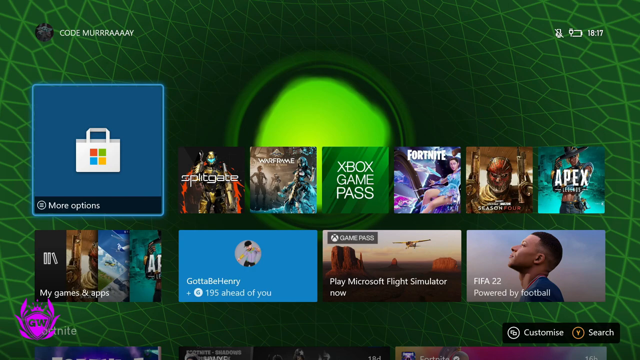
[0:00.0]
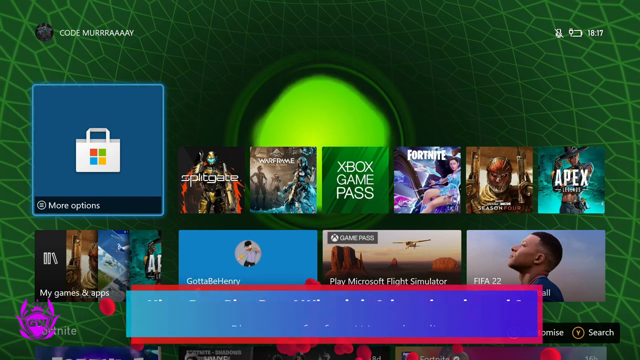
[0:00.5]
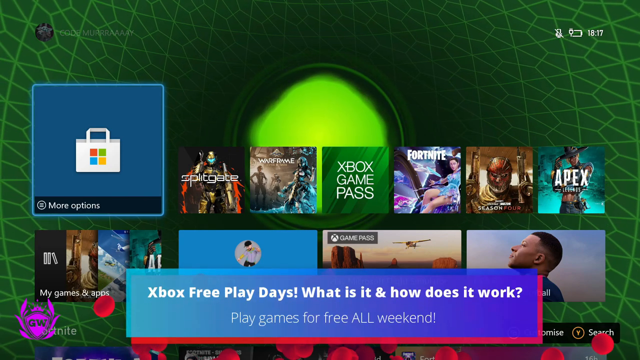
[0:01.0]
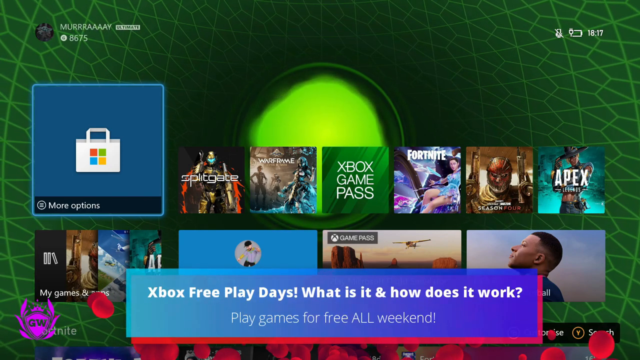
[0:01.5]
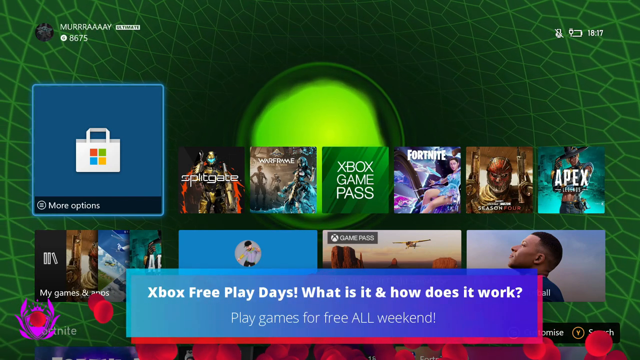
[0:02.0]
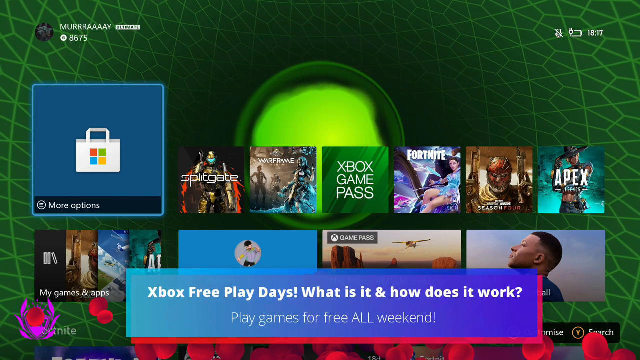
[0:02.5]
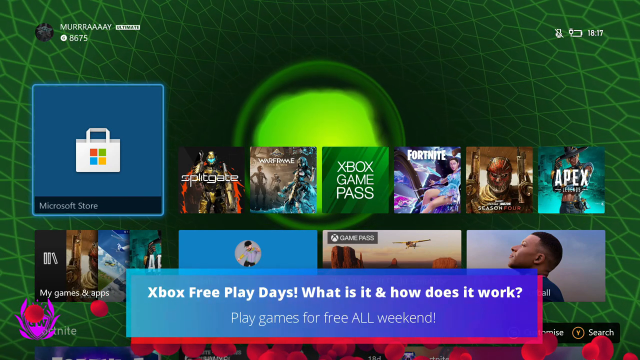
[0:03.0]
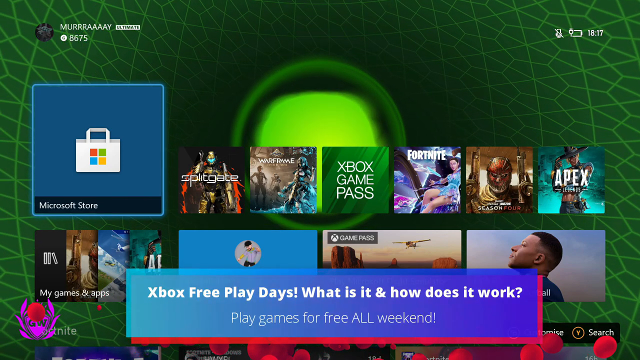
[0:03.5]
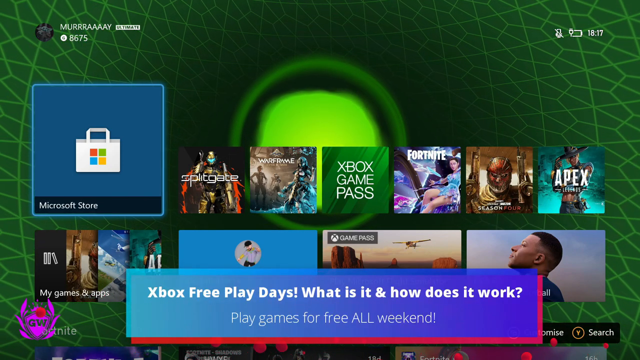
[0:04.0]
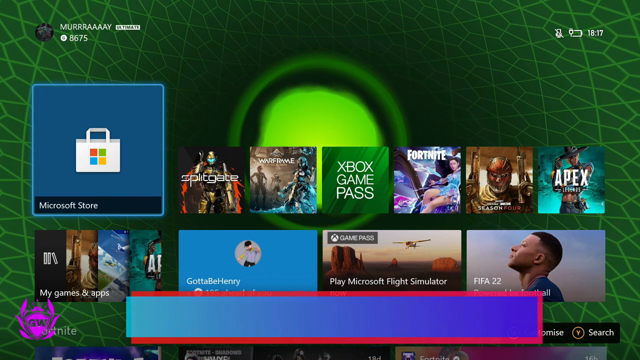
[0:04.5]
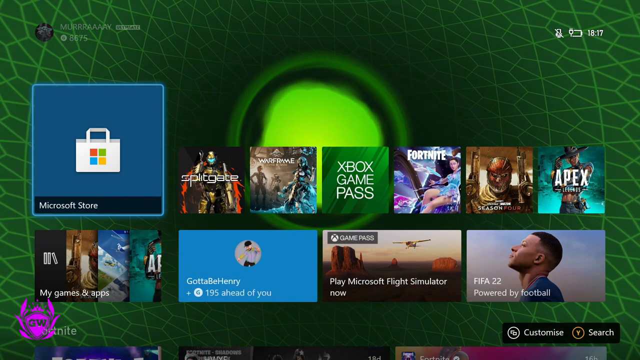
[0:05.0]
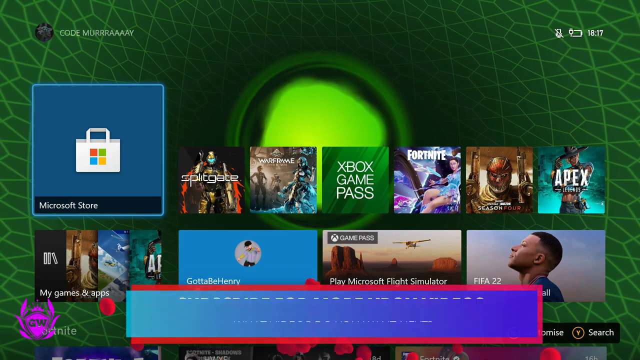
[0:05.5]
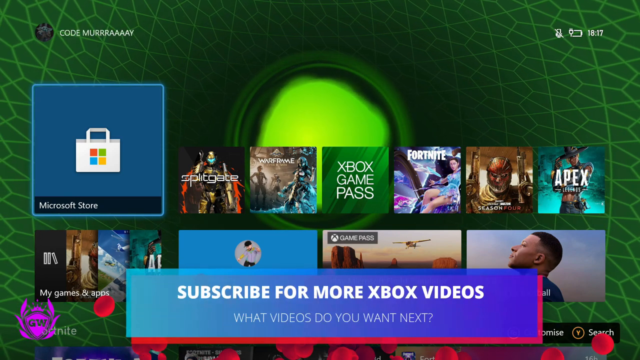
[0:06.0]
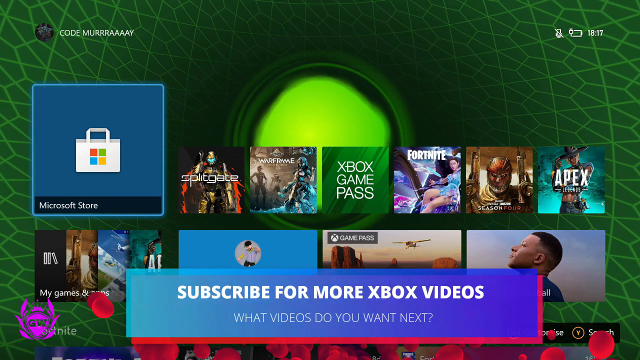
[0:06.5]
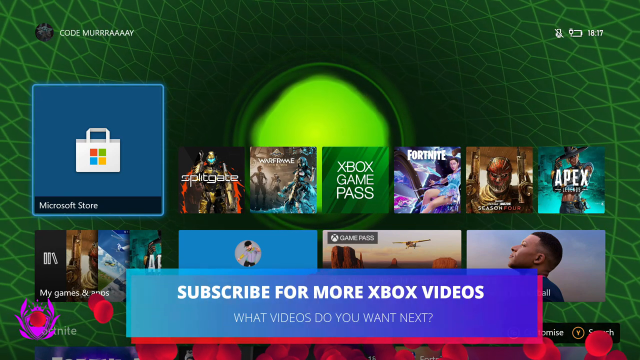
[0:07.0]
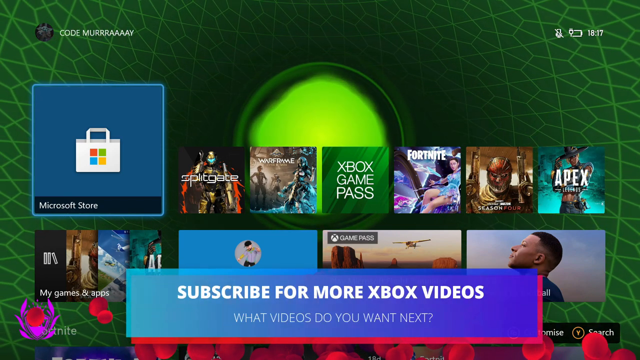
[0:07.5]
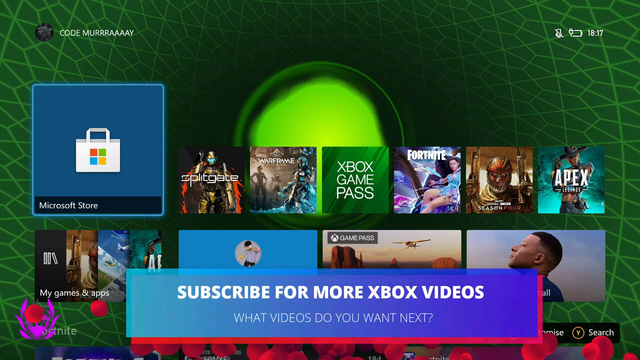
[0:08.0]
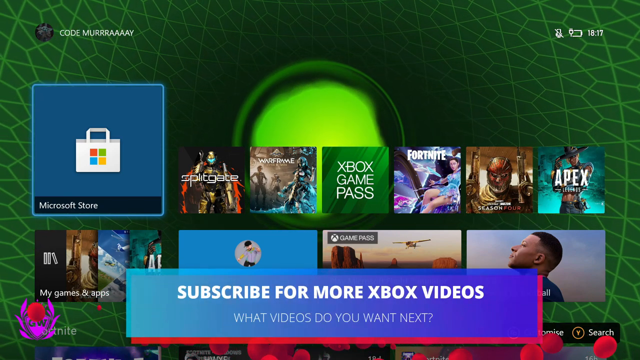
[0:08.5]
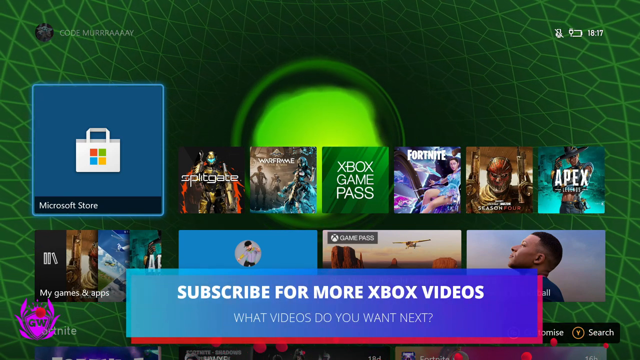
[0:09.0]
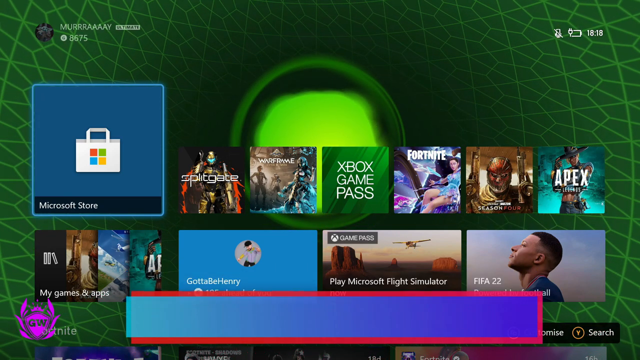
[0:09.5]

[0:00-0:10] Video games are arranged in two rows, three on the first row and four on the second, and they appear to be a variety of different games. A Microsoft shopping bag is on the left side of the screen. A pop-up box reads "Xbox Free Play Days. What is it and how does it work? Play games for free all weekend." In the lower left corner is the word "Fortnite" along with a logo containing a G and a W. In the upper left corner are the words "CODE MURRRAAAY" with a black and white logo for it.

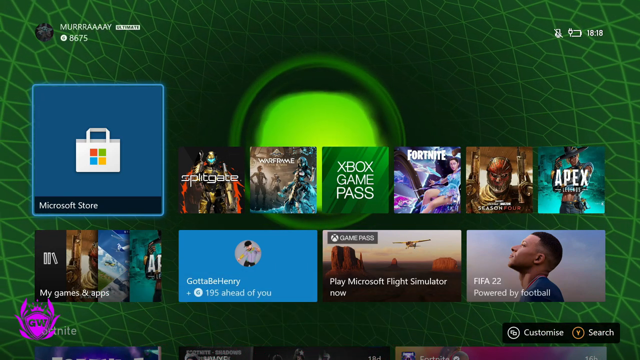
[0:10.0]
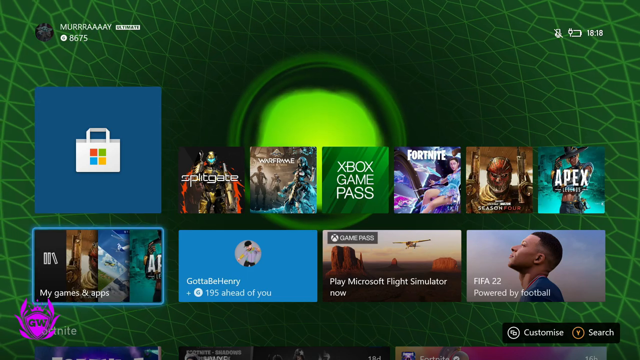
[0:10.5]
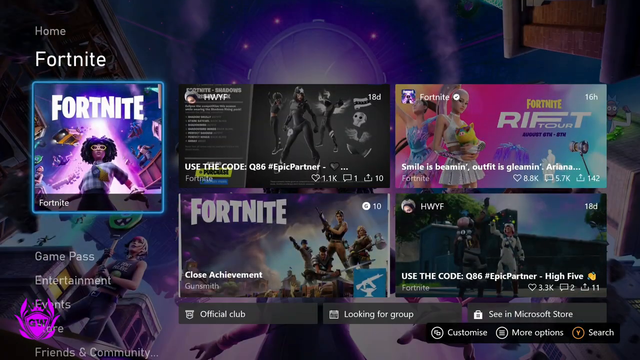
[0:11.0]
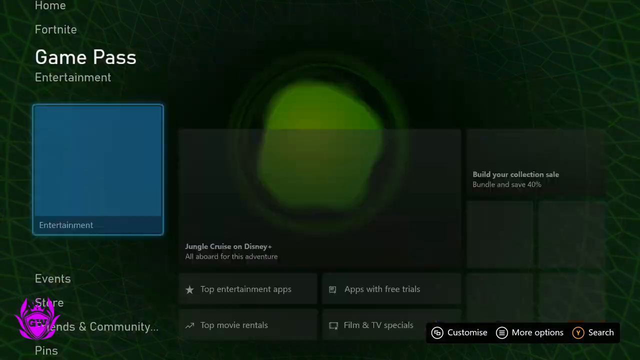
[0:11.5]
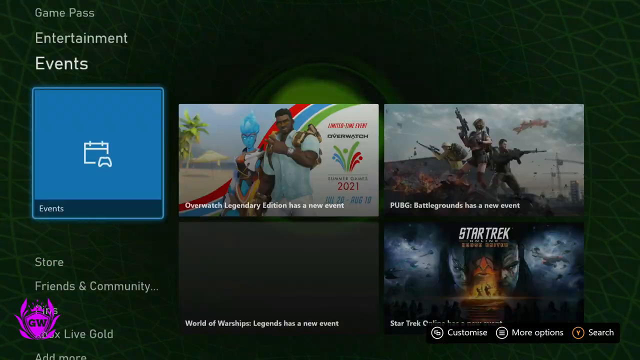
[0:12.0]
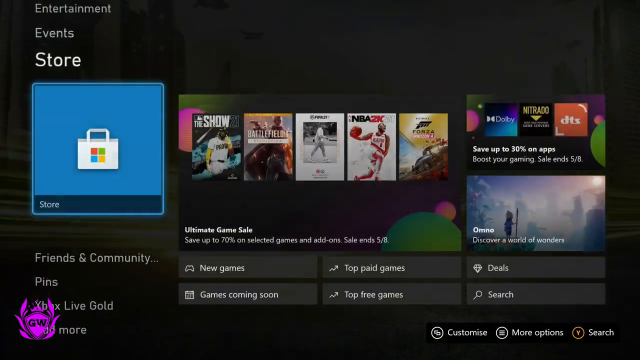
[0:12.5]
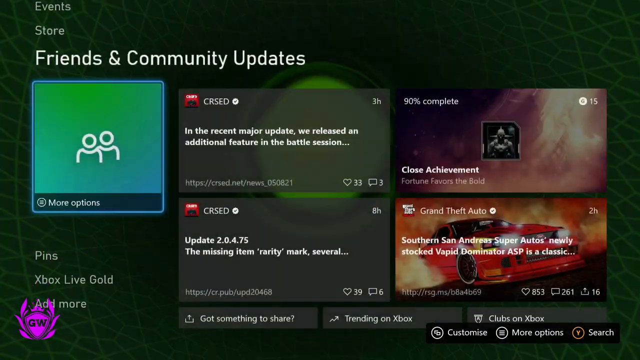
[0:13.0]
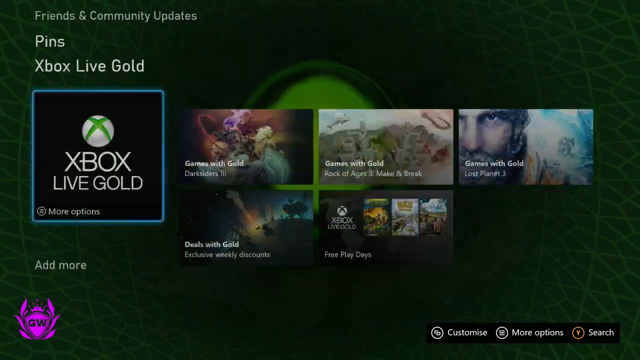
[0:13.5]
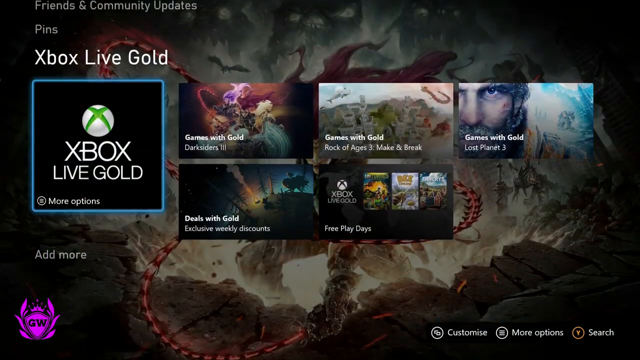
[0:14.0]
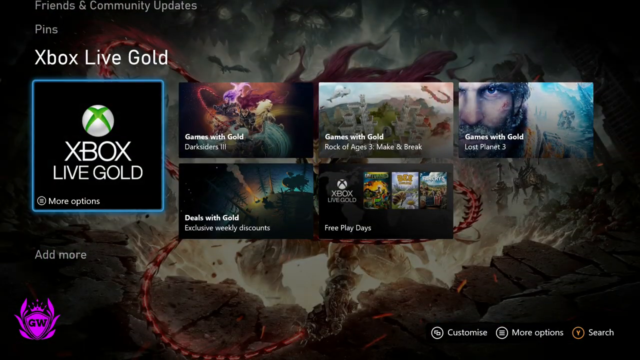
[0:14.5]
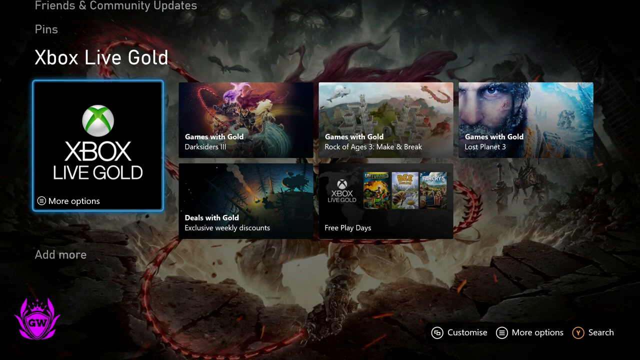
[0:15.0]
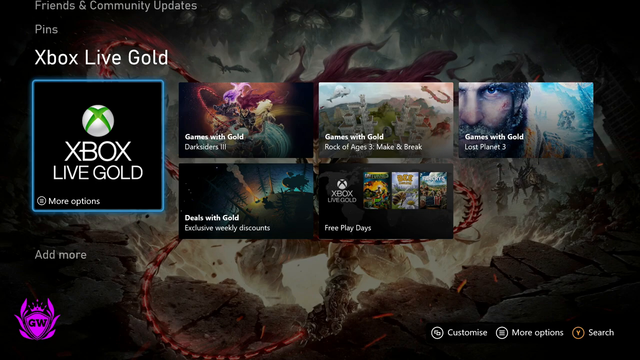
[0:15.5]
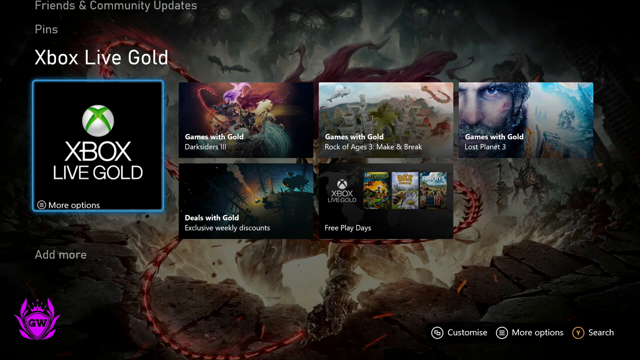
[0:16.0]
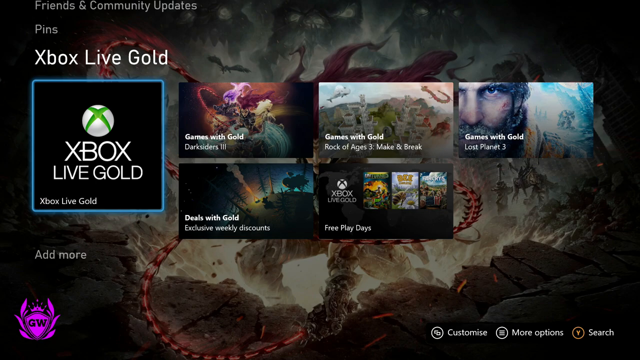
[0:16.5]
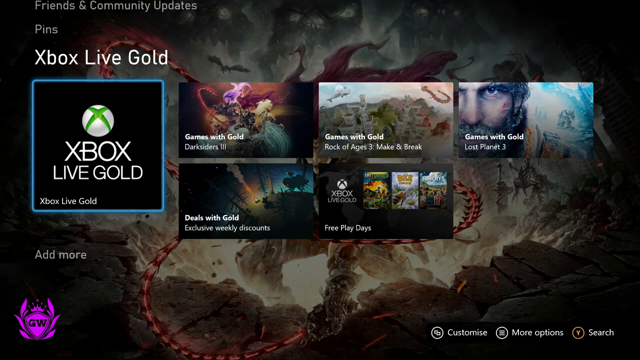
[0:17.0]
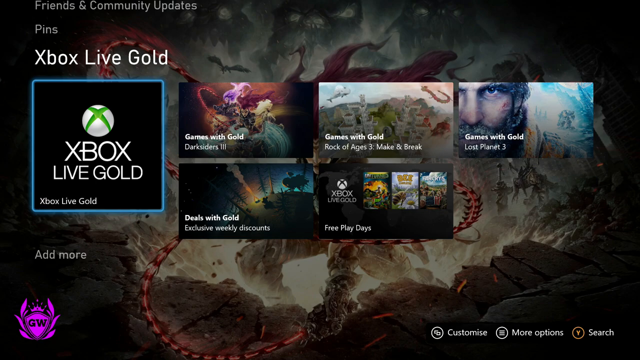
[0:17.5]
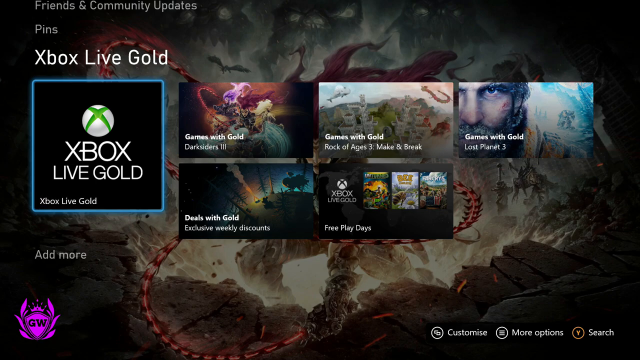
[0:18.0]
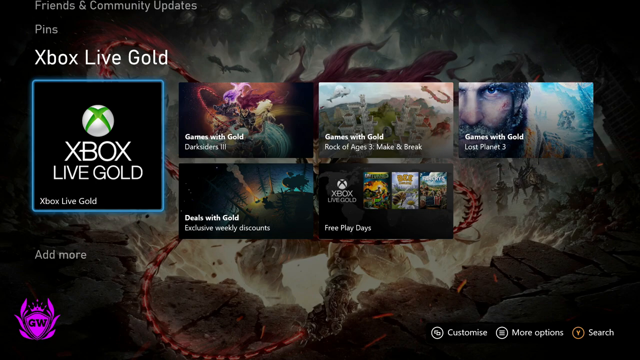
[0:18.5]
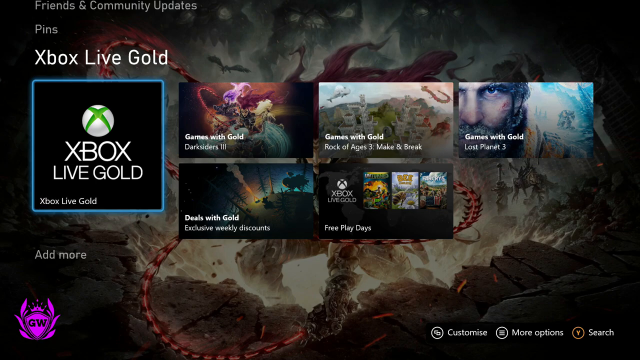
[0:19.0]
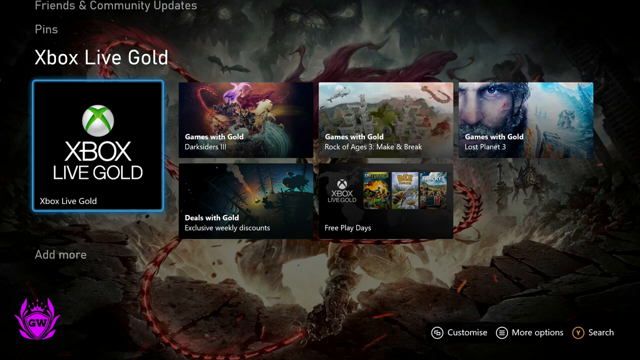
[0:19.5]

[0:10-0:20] A variety of video games appear in individual pop-up boxes. The background is green: a darker green base with a lighter green design all over it, and a bright neon green logo in the middle. In the upper right corner, the battery percentage reads 18.18 in white. In the middle left is a pop-up box for the Microsoft Store with the Microsoft logo in the middle of the box. Next to it are six pop-up boxes, five for video games and one for the Xbox Game Pass. A second row holds four pop-up boxes for four different video games.